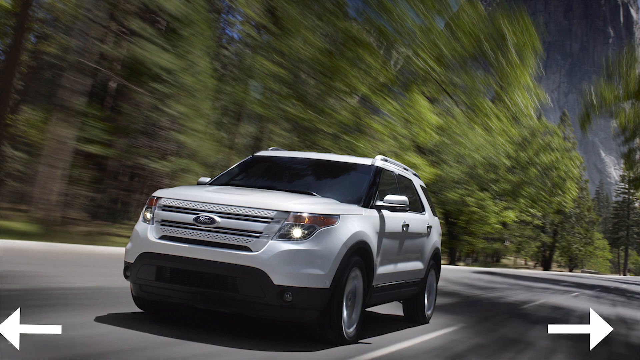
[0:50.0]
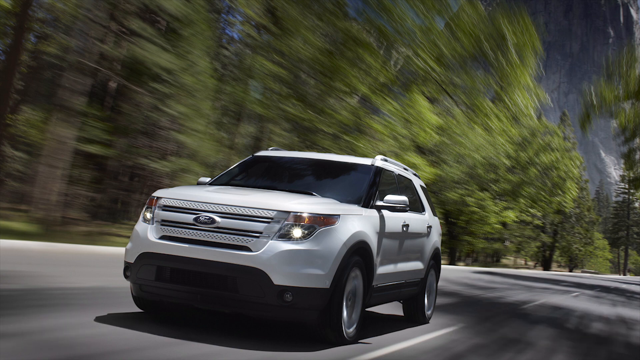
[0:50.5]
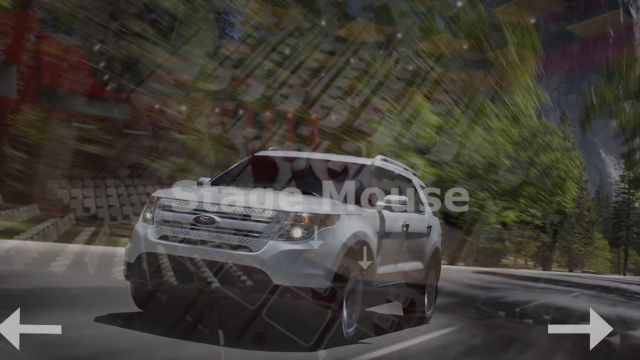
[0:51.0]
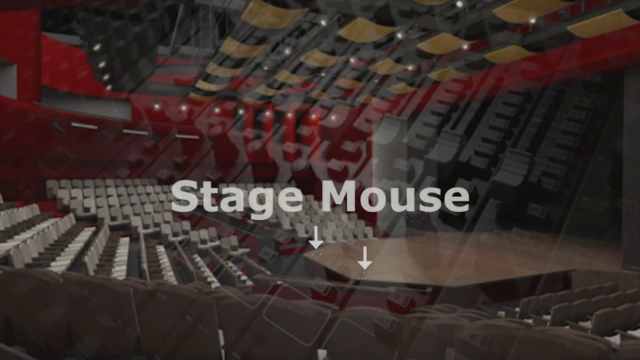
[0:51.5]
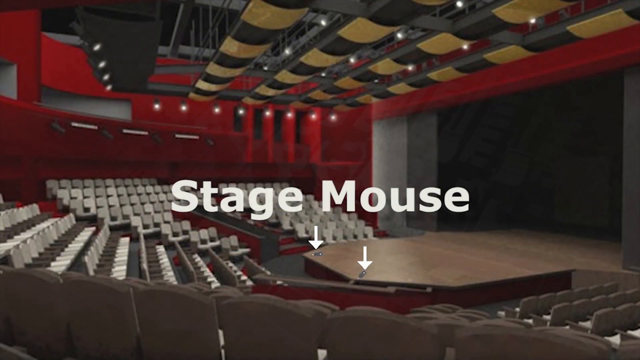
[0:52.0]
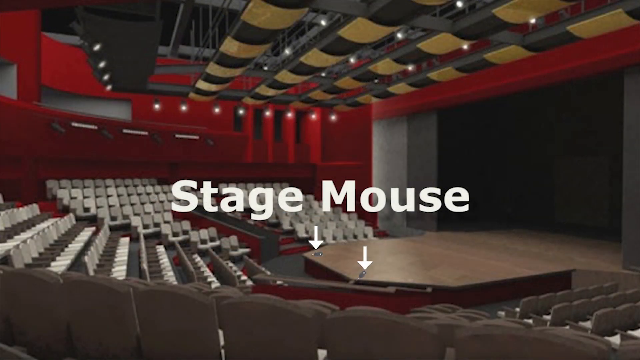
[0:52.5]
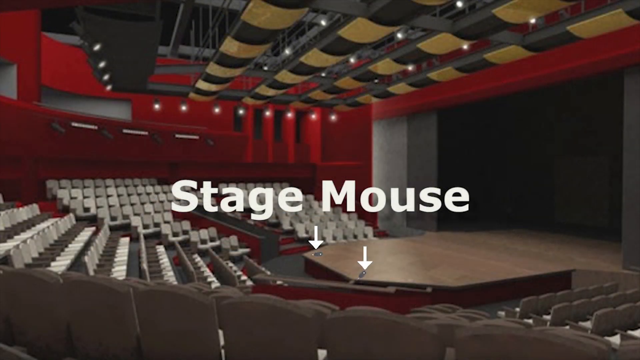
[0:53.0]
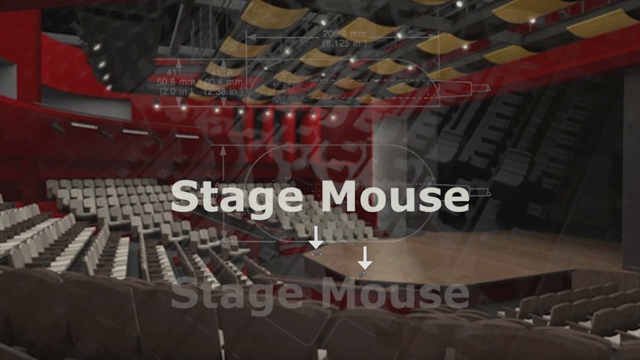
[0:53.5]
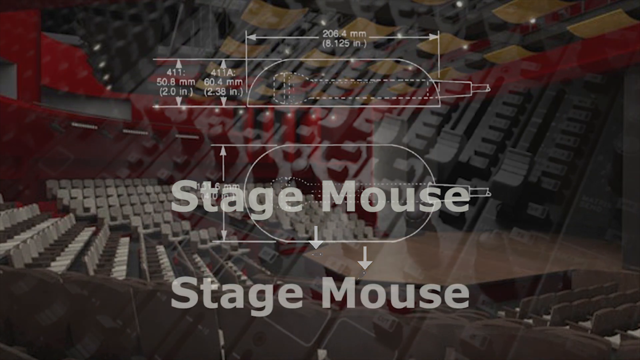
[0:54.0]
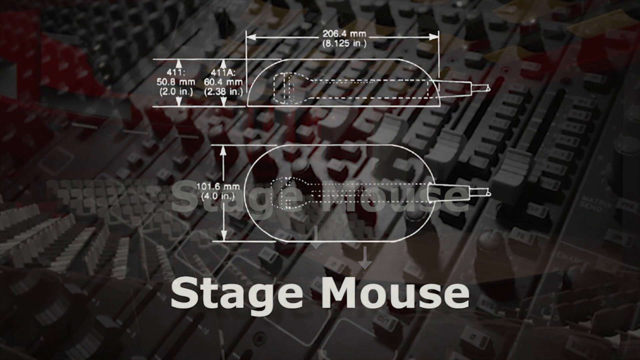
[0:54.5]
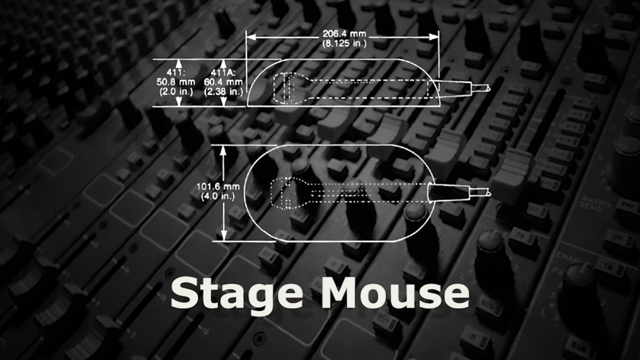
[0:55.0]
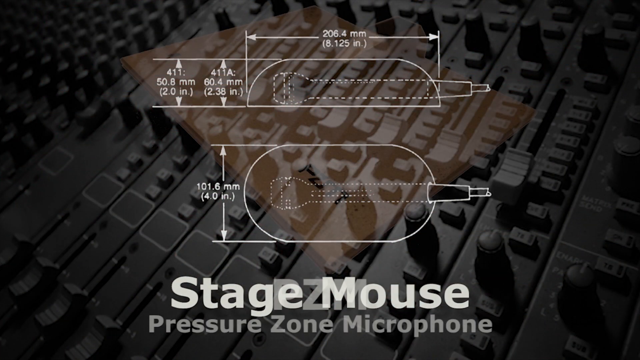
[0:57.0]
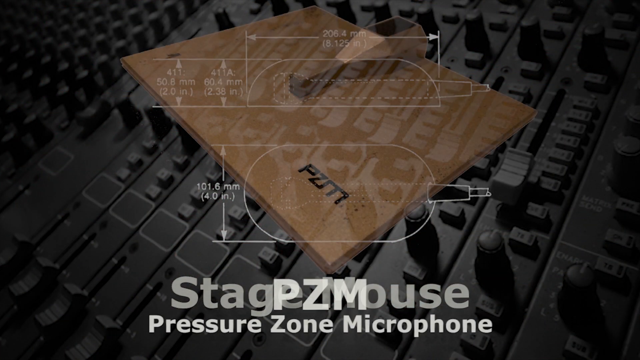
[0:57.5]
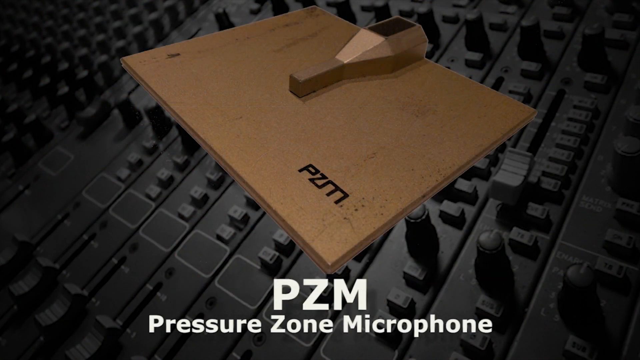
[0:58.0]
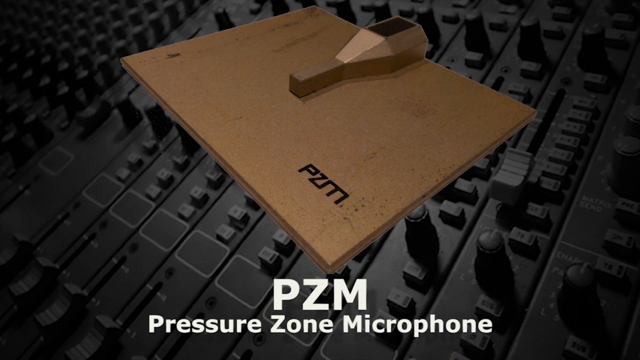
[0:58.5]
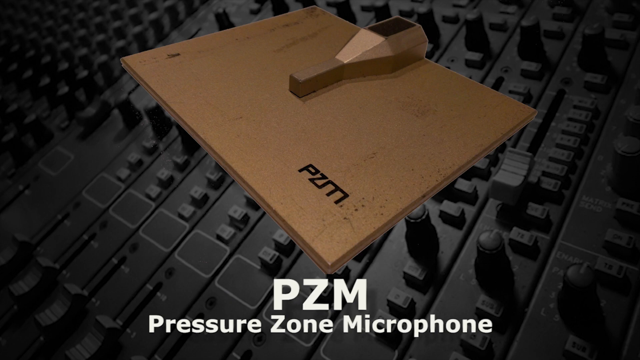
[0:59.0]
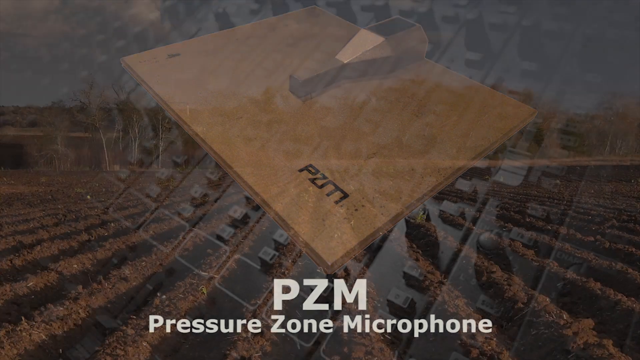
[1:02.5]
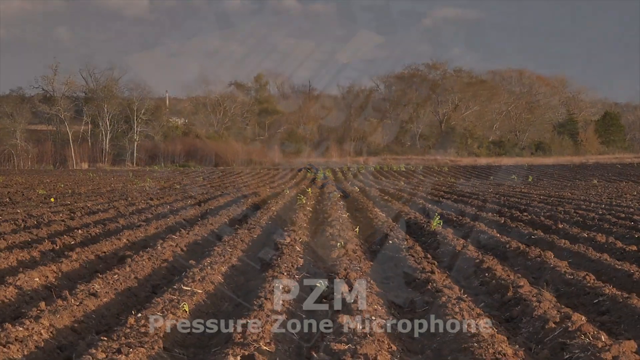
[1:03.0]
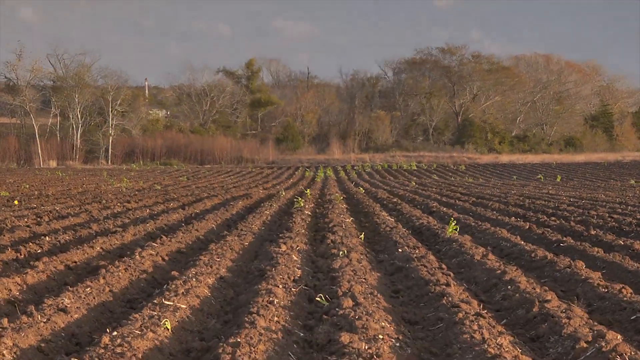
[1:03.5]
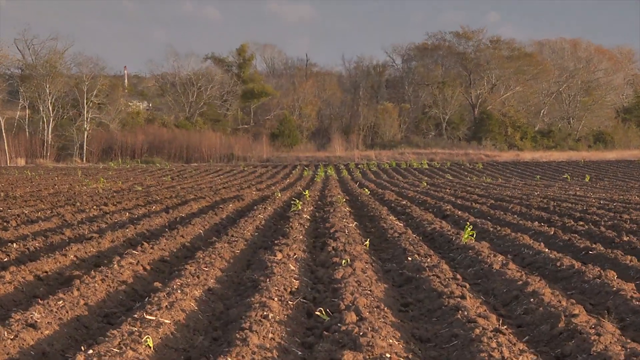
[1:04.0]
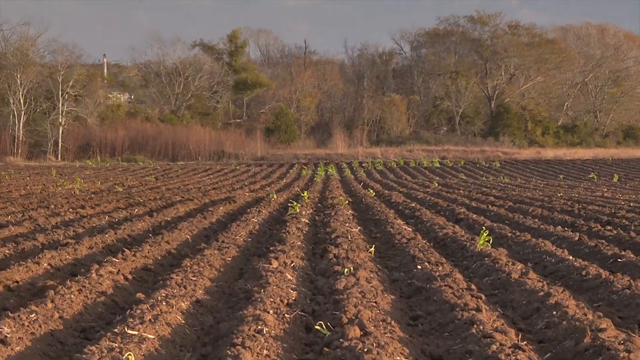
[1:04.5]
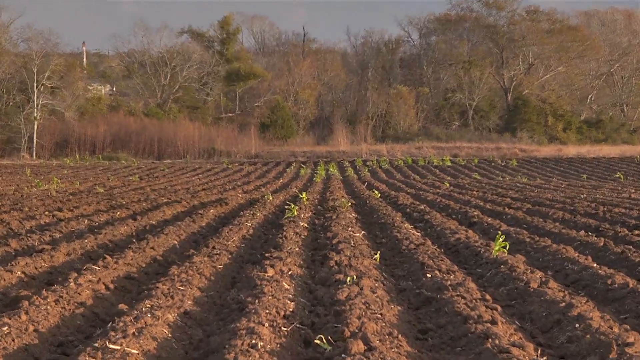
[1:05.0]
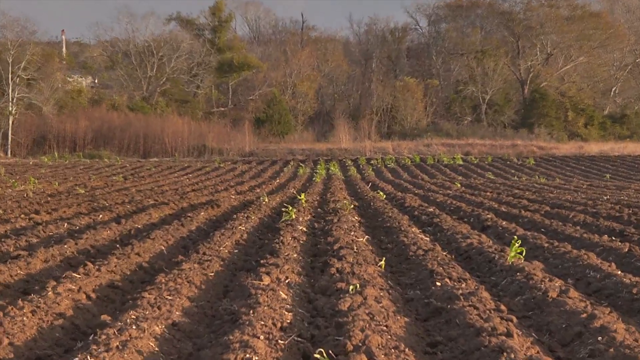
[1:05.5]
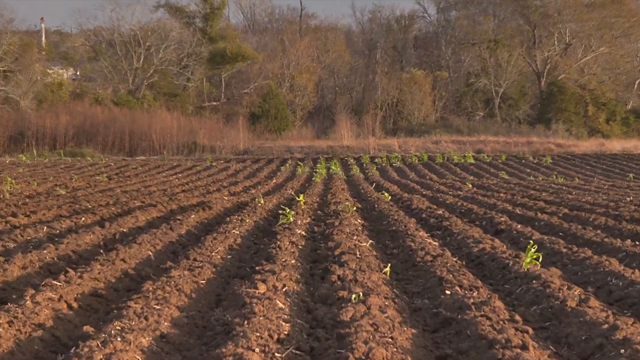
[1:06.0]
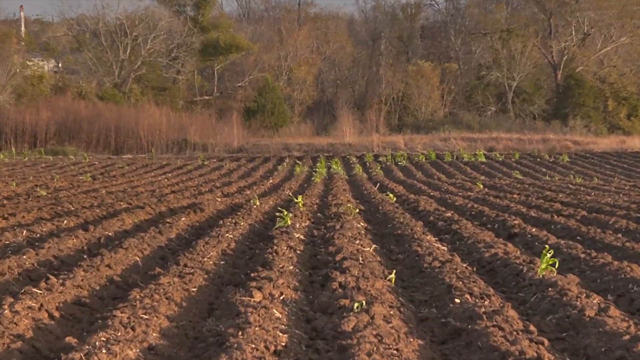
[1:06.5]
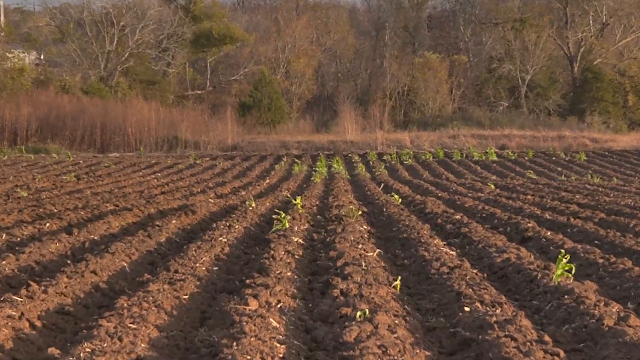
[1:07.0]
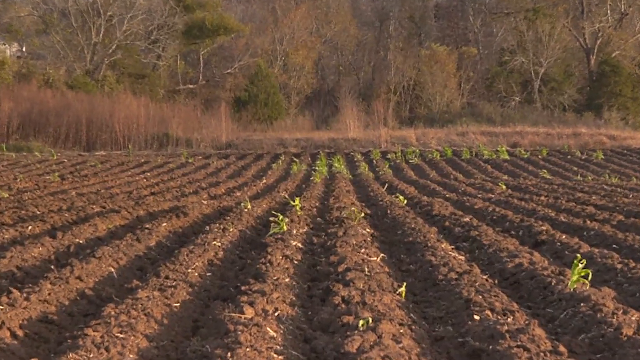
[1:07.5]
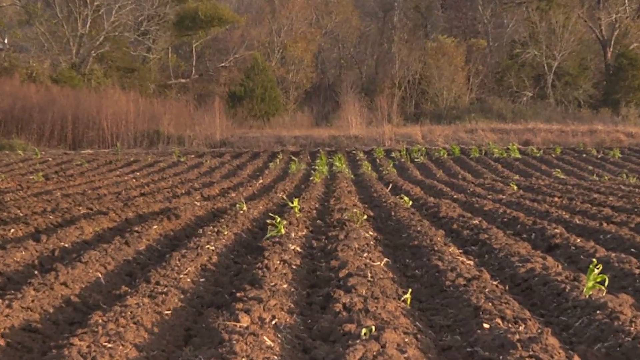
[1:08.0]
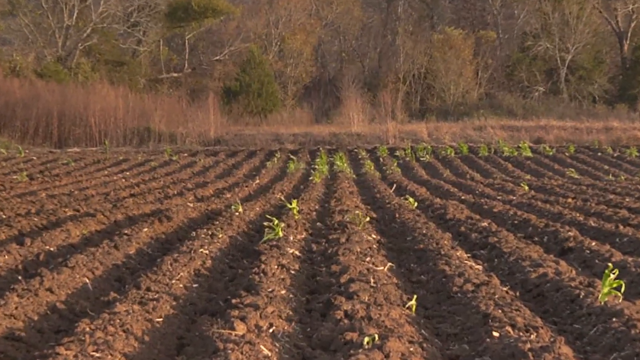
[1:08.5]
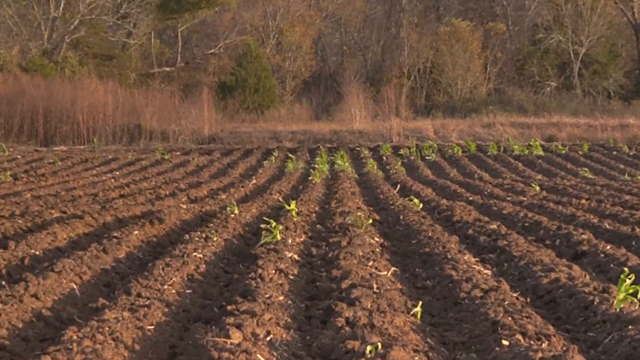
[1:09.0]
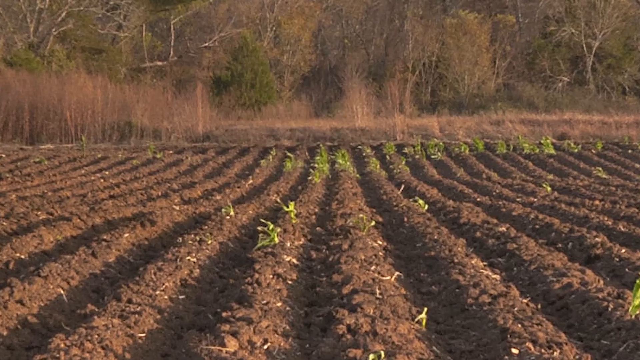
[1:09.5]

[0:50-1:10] The still photo of the white Ford SUV moving toward the camera on a highway with tall green forest growth alongside dissolves to a still photo of an auditorium with the words "stage mouse" in bold white sans-serif font. The auditorium appears to be treated with red acoustic materials and soffits on the side walls. The view is from the right-side seating section, overlooking the center section and the two left-of-stage seating sections, which appear to have about eight rows of seats. A semi-octagonal stage is clearly visible. Above the auditorium there also appear to be acoustical materials in an alternating pattern of charcoal or graphite black and tan. Two white arrows, the same color as the lettering, point down on both sides of the front of the stage, stage left and stage right, apparently showing where a stage mouse device is. The next still frame dissolves in, showing a recording mixing board with a white blueprint-style diagram of a microphone mounted on some type of plate, apparently a stage mouse, with measurements and dimensions marked with arrows in the style of a draft drawing. The words "stage mouse" appear toward the lower third of the frame, with the mixing board as background. The blueprint fades away, and a gold-colored pressure zone microphone appears with the mixing board still behind it. Below it, in white bold sans-serif letters, are "PZM" and below that "pressure zone microphone". This frame fades away, and a scene fades in of an agricultural farm plot with rows of crops that have not yet grown. The camera rapidly zooms forward. Just beyond the clearing is medium-growth bush that is somewhat gray, as if in early spring before the leaves have turned green.